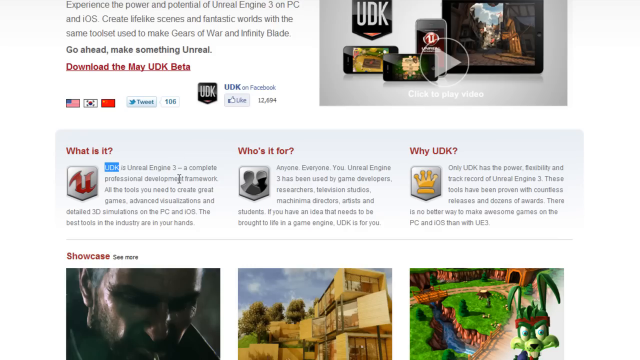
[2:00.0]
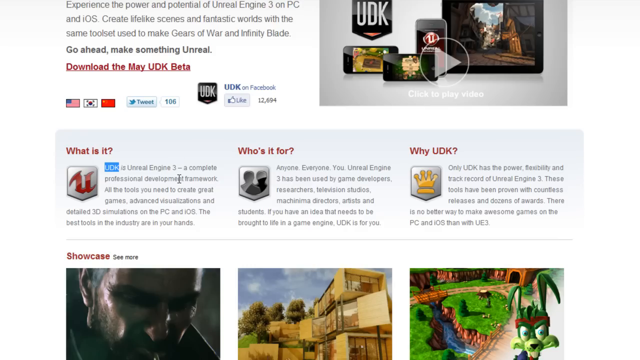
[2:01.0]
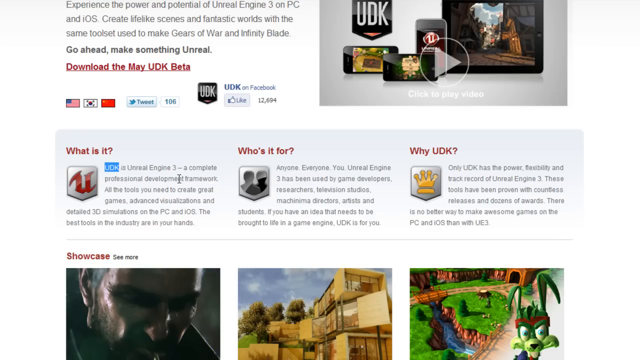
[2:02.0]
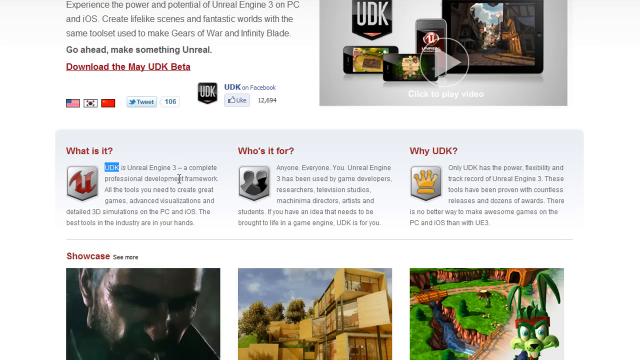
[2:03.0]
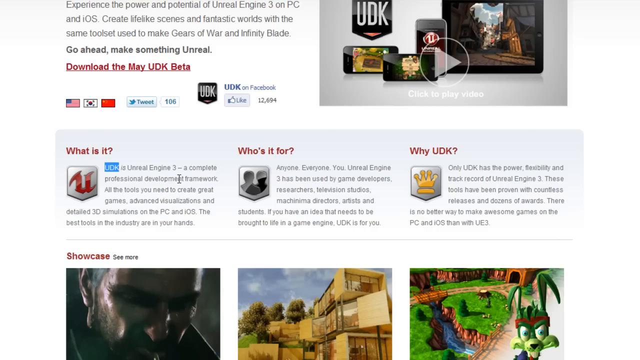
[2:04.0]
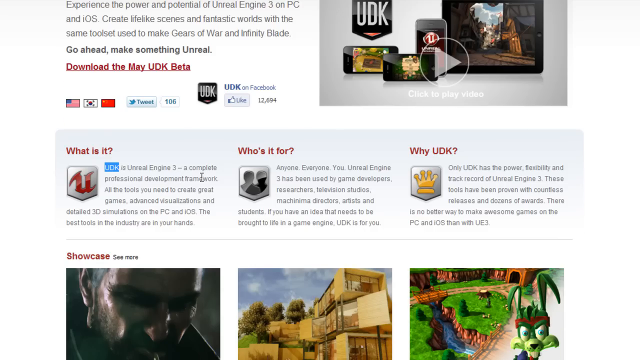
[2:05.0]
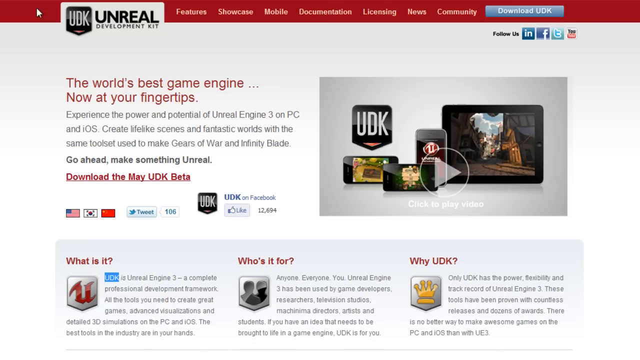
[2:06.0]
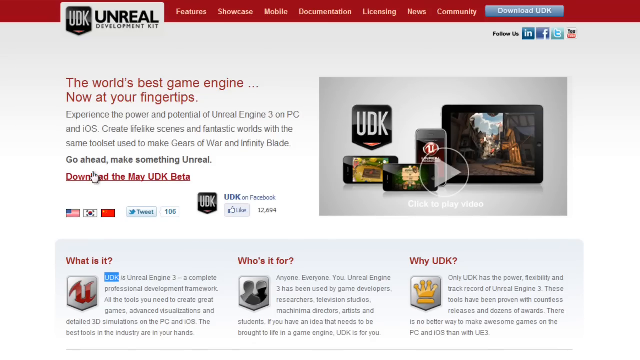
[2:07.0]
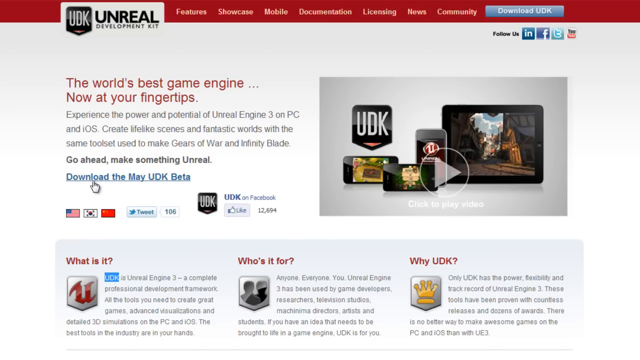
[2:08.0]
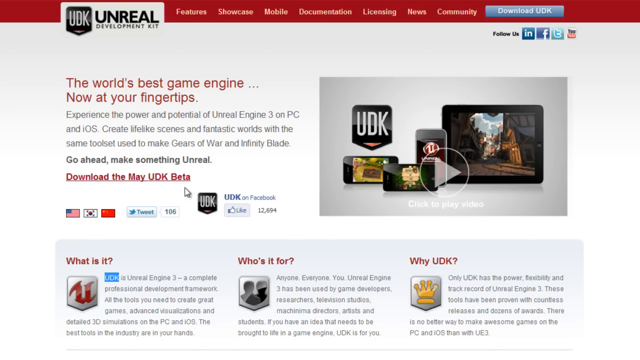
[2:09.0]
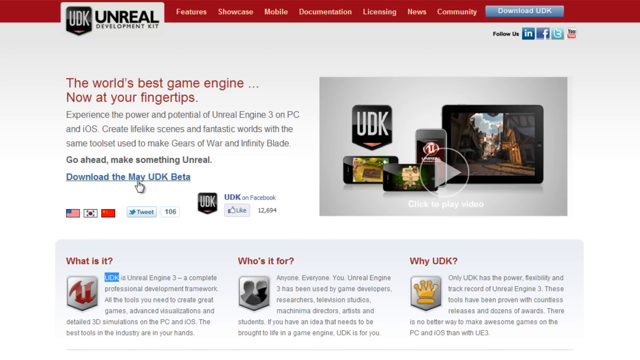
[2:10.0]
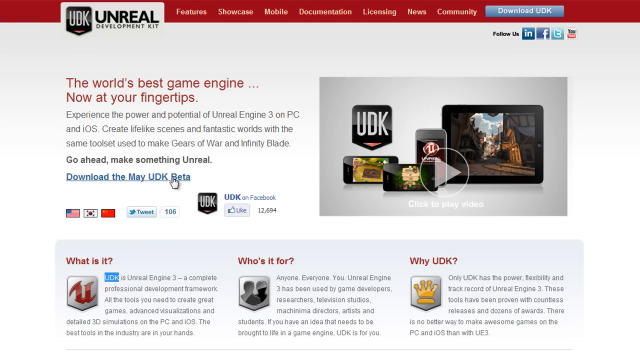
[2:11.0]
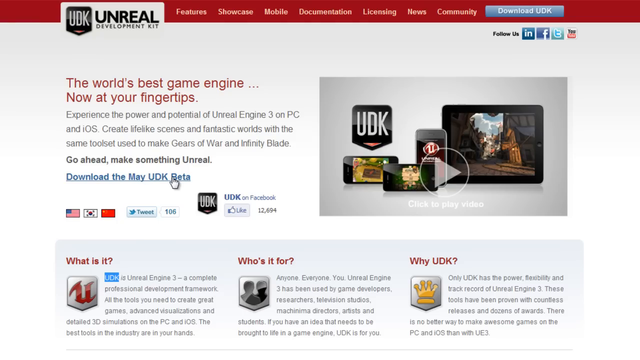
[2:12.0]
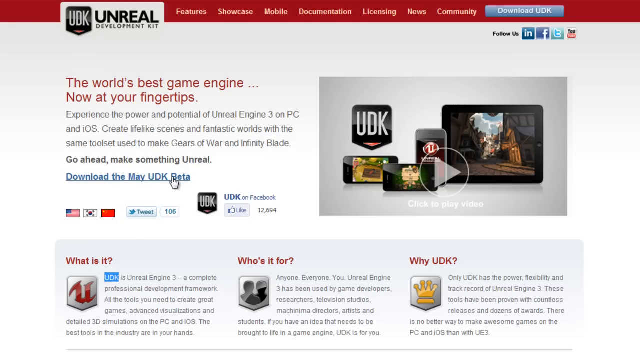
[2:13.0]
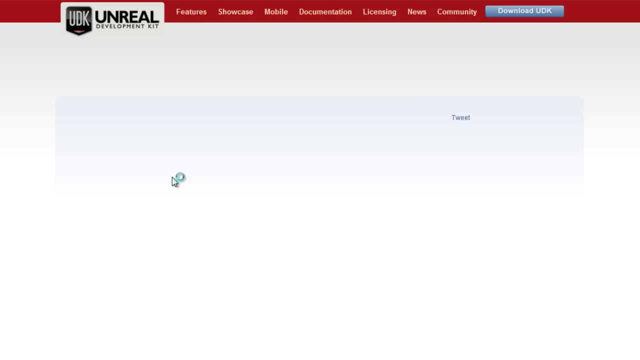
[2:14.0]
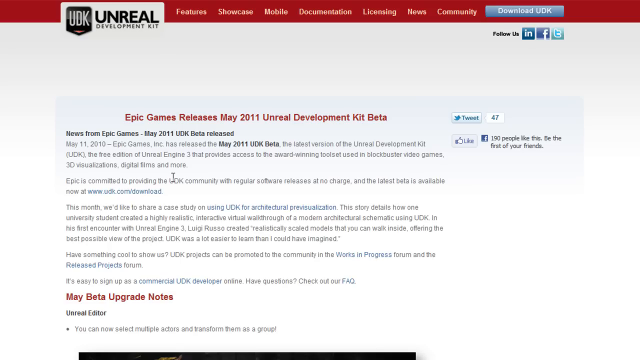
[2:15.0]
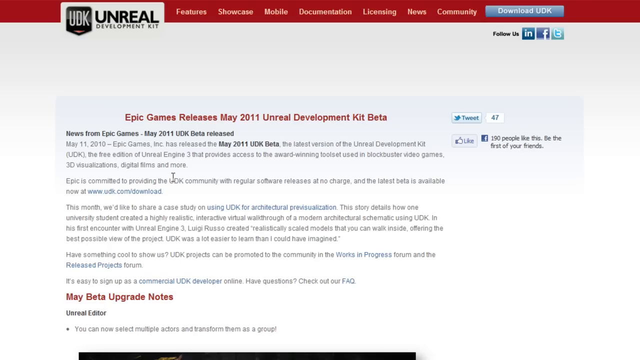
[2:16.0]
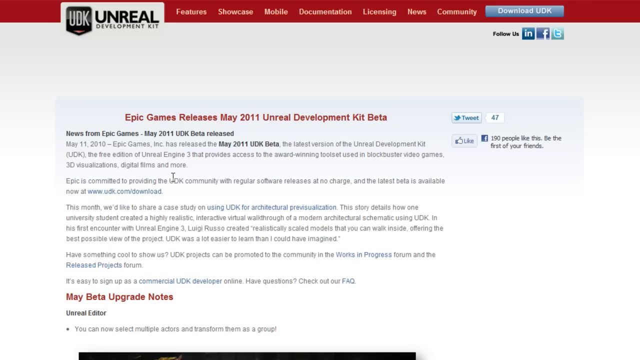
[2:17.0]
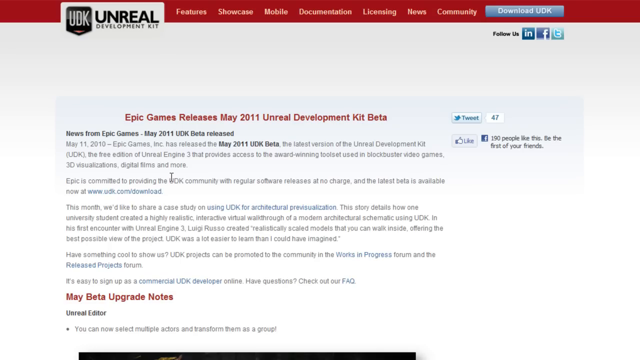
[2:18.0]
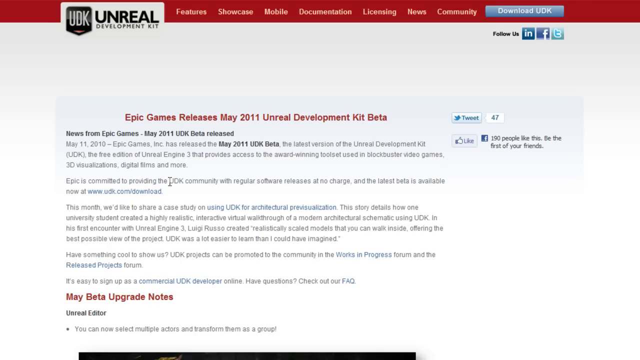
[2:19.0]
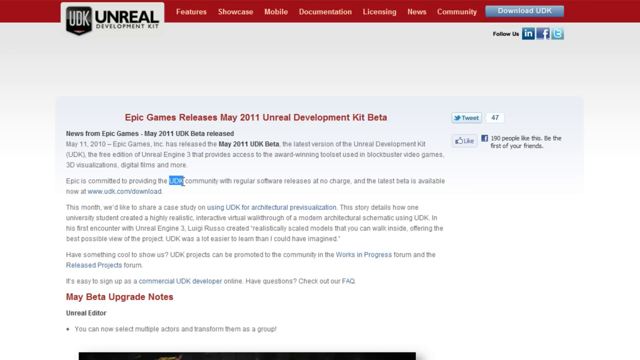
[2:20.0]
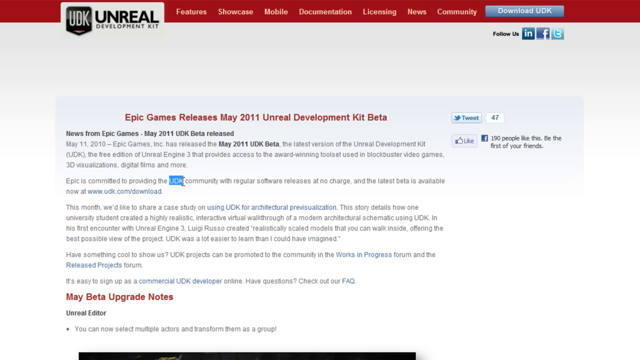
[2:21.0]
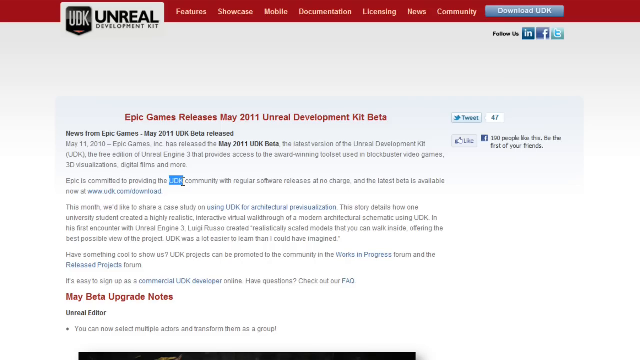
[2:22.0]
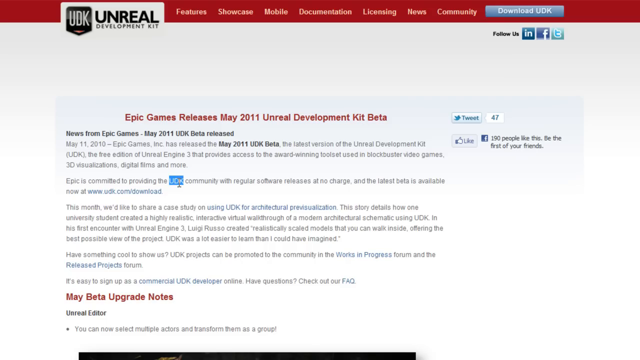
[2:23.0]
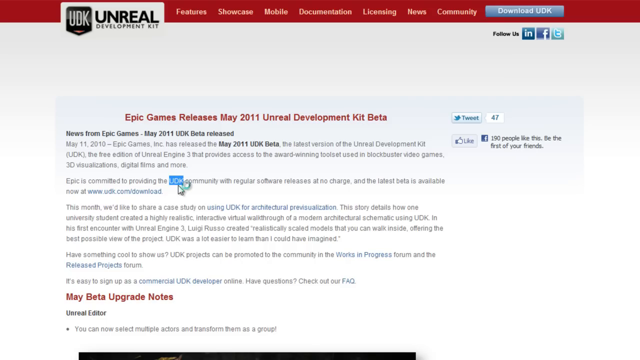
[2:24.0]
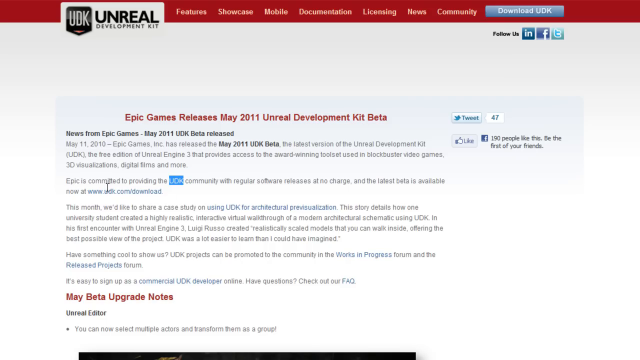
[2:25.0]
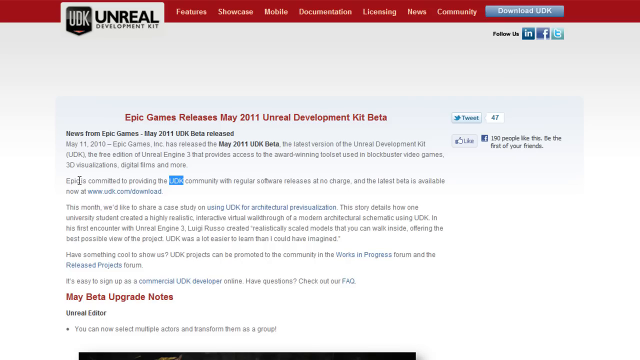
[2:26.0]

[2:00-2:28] Under "who's it for" the page says "anyone, everyone, you. Unreal Engine 3 has been used by game developers, researchers, television studios, directors, artists, and students. If you have an idea that needs to be brought to life in a game engine, UDK is for you." The "why UDK" section begins "only UDK has the power, flexibility, and track record of" and continues "These tools have been proven with countless releases and dozens of awards. There is no better way to make awesome games on a PC and iOS than with UE3." Underneath is a showcase option with different images. The person scrolls back to the top and hovers the mouse over "download the May UDK beta", then clicks on it, bringing up a new page titled "Epic Games releases May 2011 Unreal Development Kit beta". He highlights the text underneath where it says "UDK" and moves the mouse over to the left-hand side.